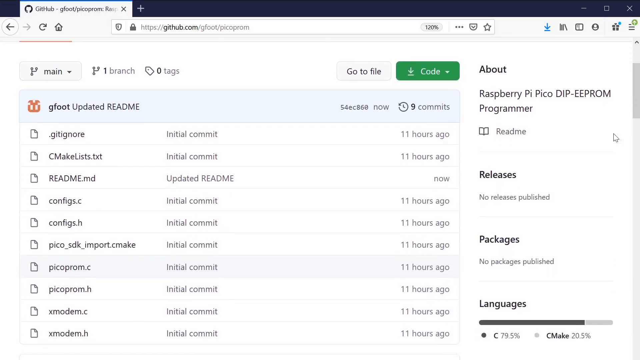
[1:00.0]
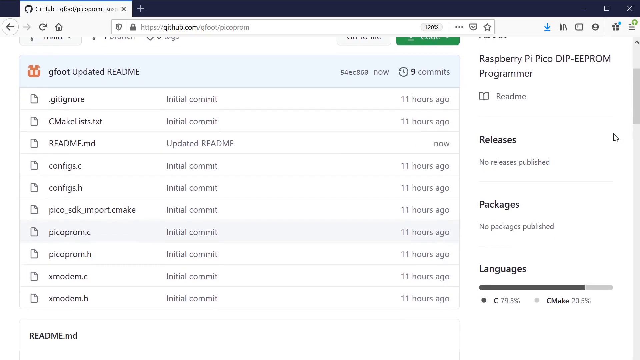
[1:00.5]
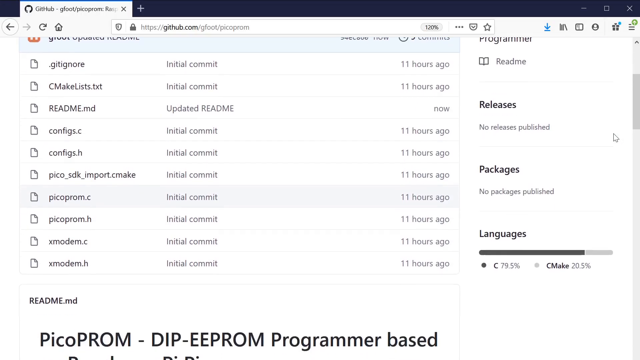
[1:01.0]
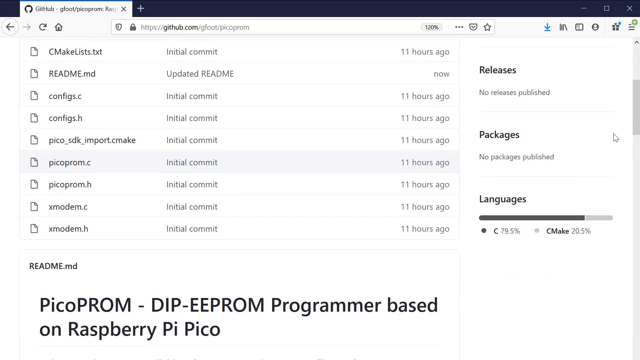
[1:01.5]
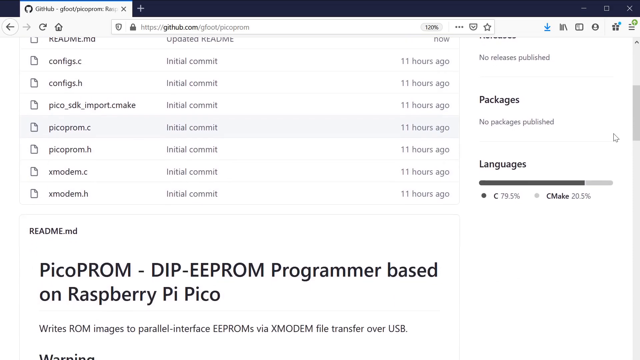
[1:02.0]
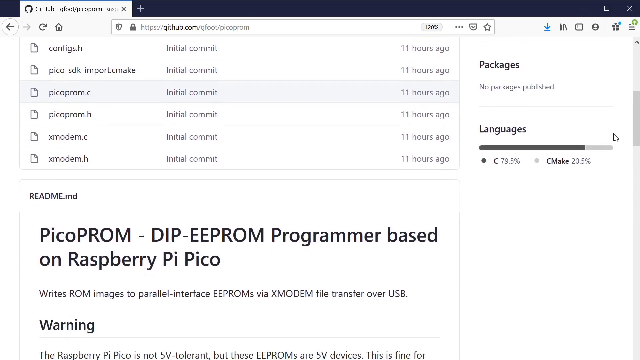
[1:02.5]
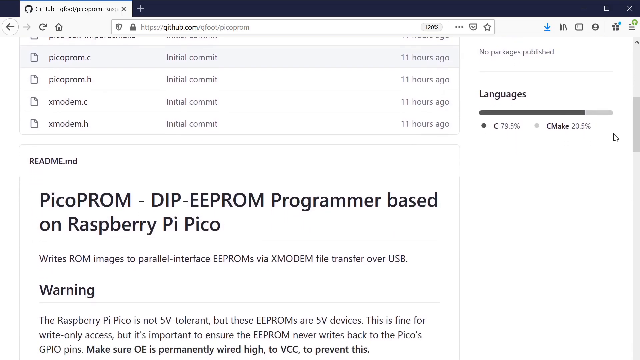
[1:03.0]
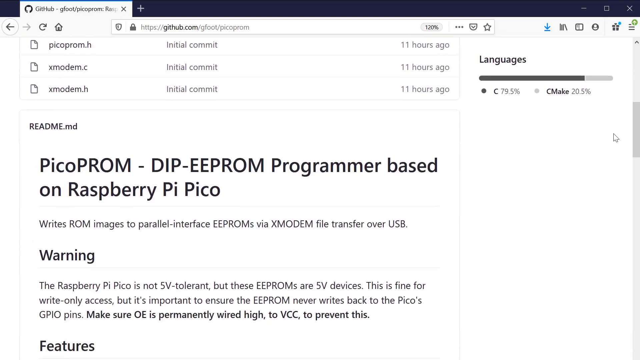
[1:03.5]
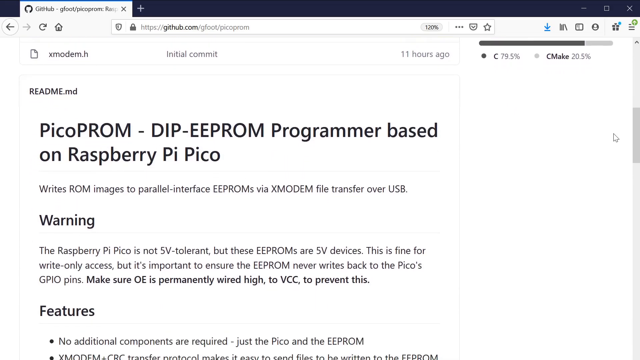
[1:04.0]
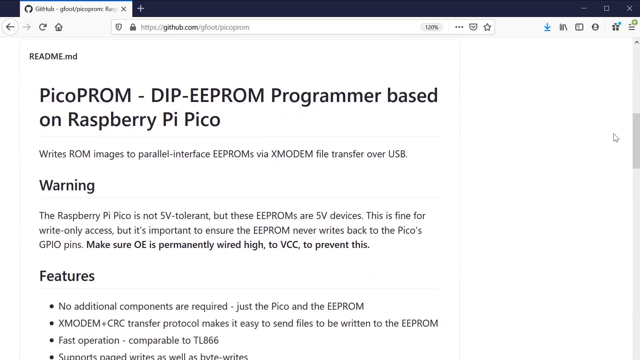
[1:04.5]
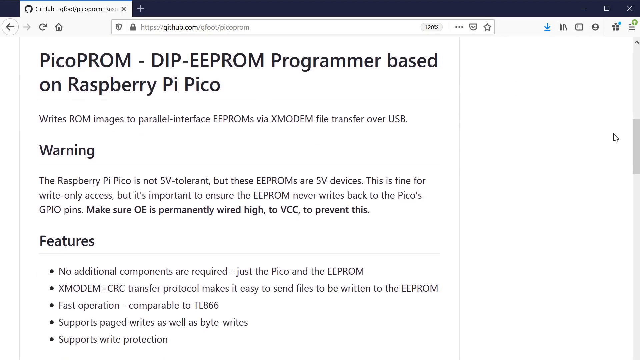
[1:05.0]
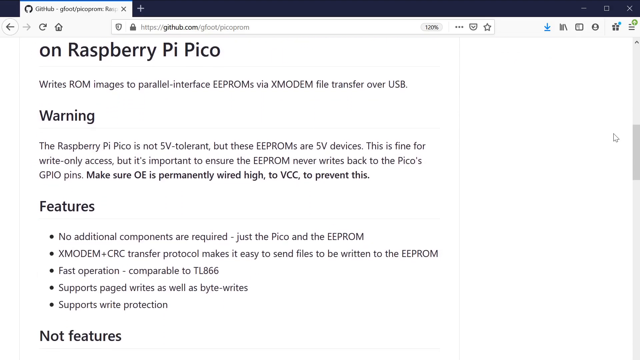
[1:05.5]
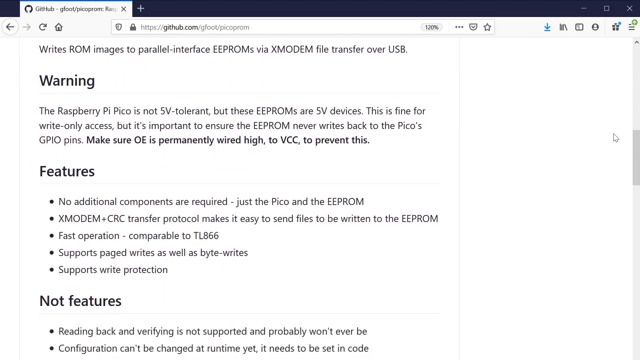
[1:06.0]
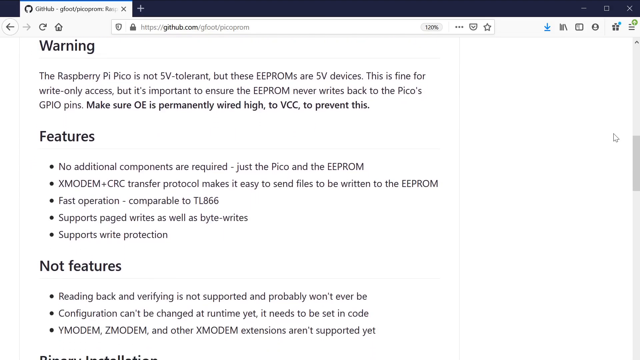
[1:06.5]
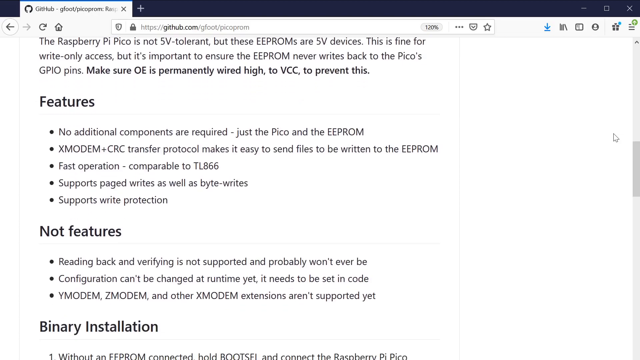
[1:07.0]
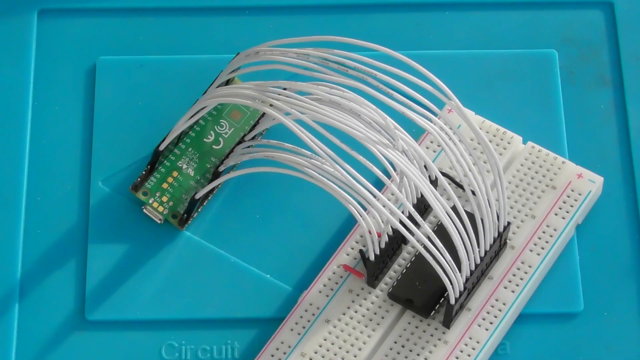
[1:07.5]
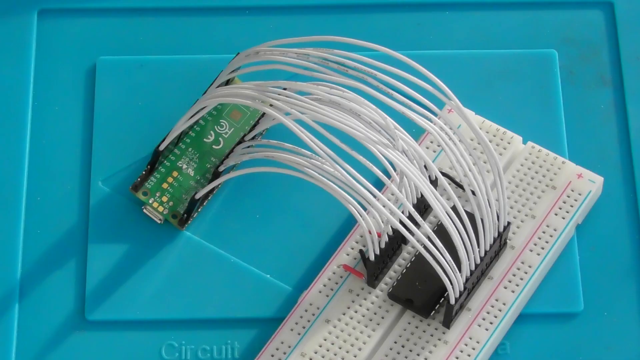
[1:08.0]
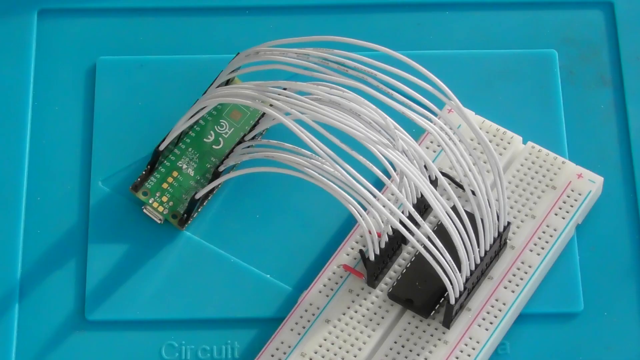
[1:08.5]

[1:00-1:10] Text on the computer shows words including "warning" and "features", apparently programmer-related content. The information seems to have been transferred from what may be a memory stick onto the computer, where it can now be read.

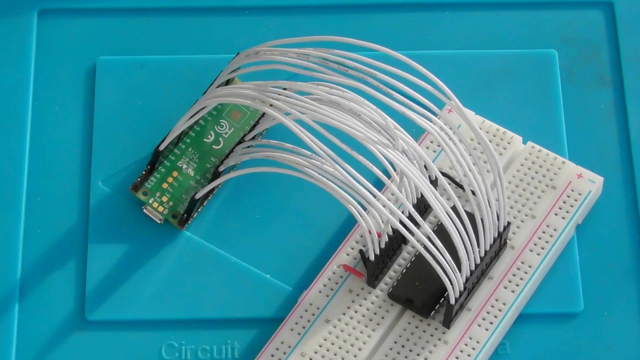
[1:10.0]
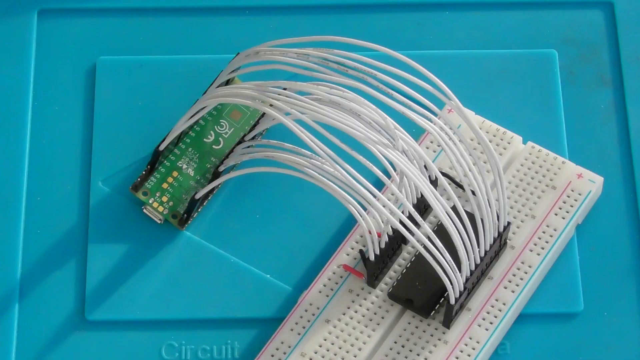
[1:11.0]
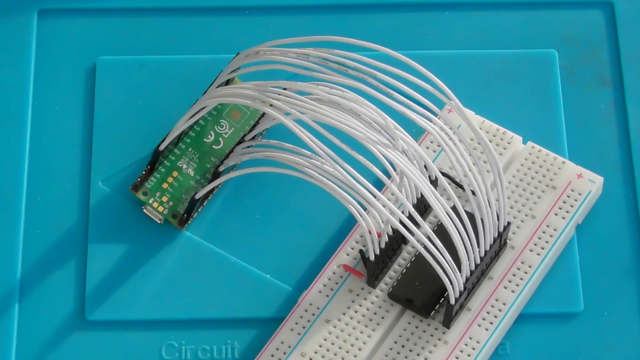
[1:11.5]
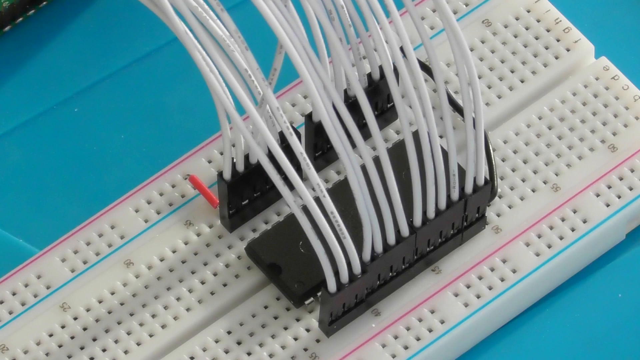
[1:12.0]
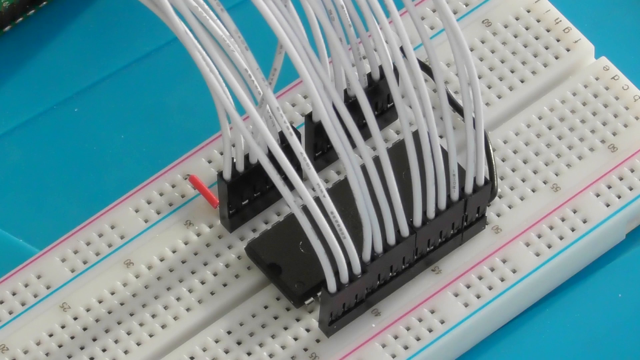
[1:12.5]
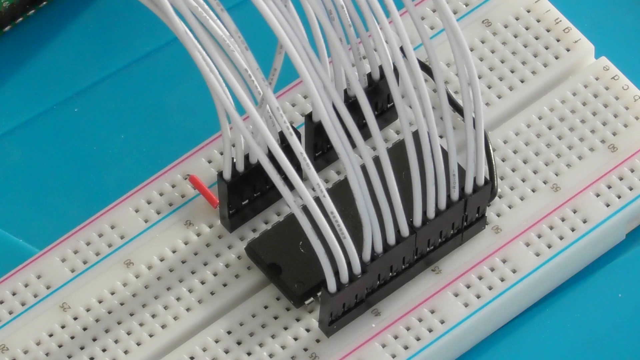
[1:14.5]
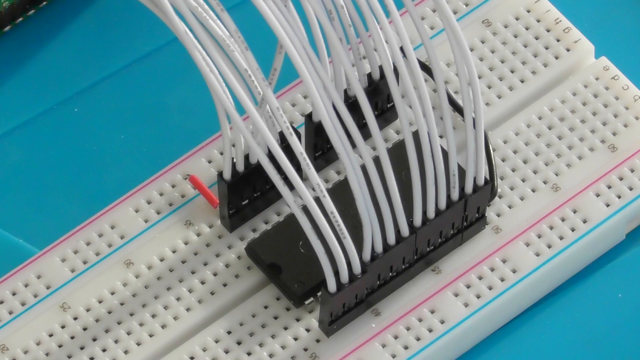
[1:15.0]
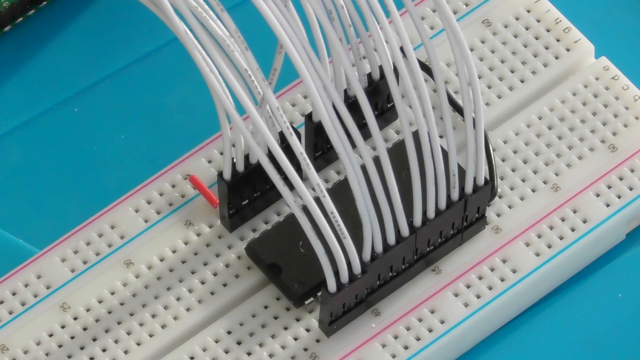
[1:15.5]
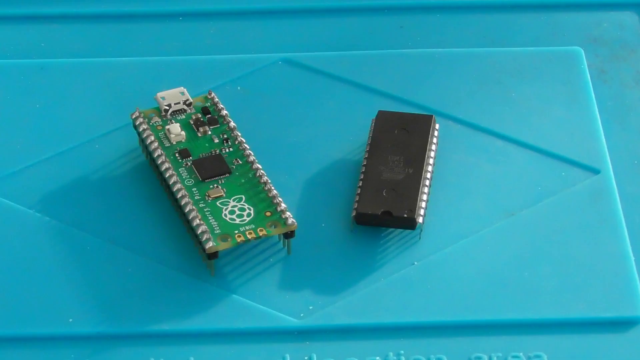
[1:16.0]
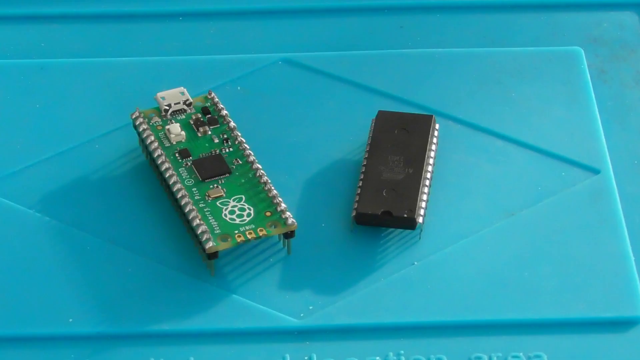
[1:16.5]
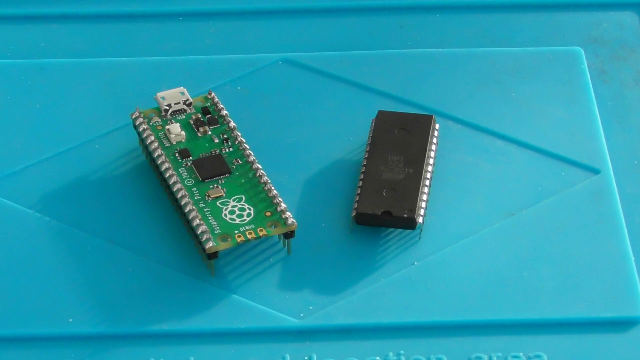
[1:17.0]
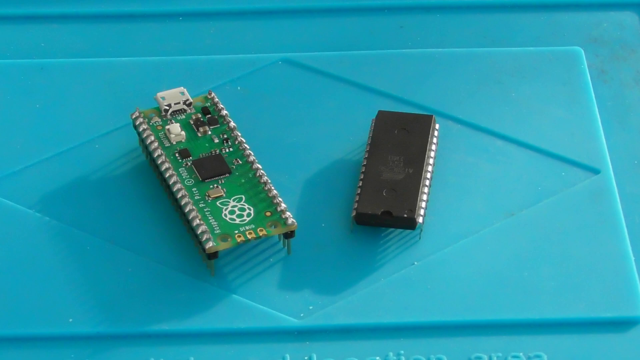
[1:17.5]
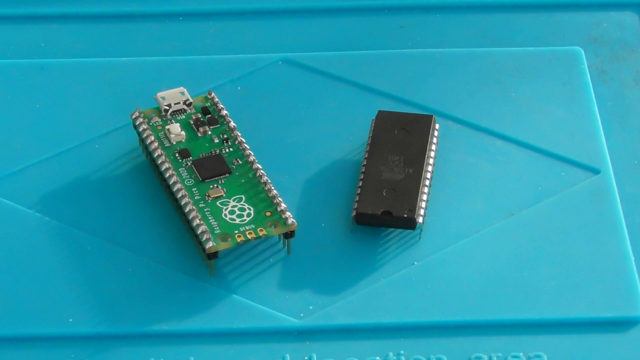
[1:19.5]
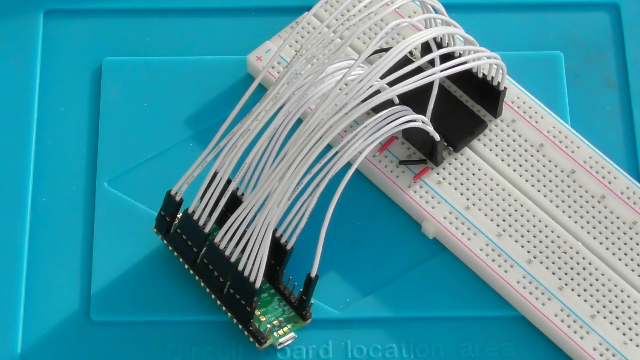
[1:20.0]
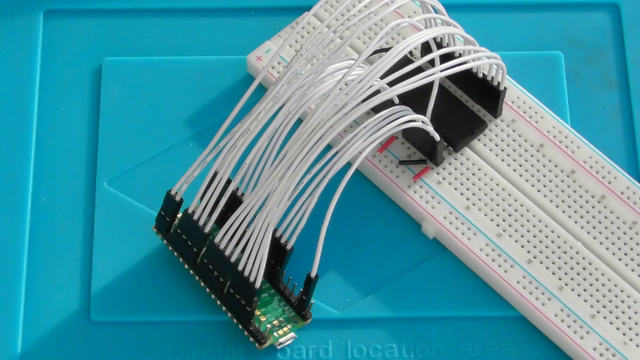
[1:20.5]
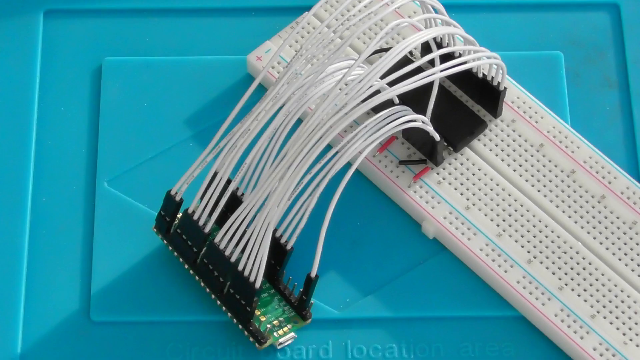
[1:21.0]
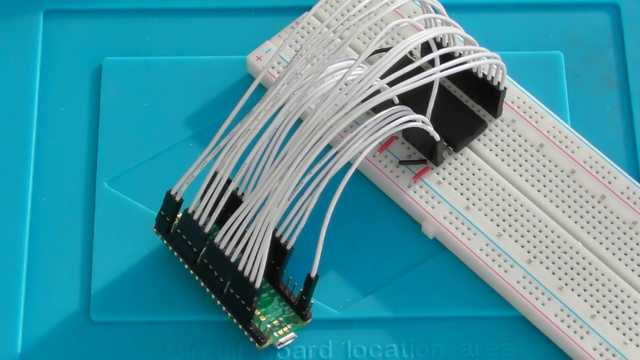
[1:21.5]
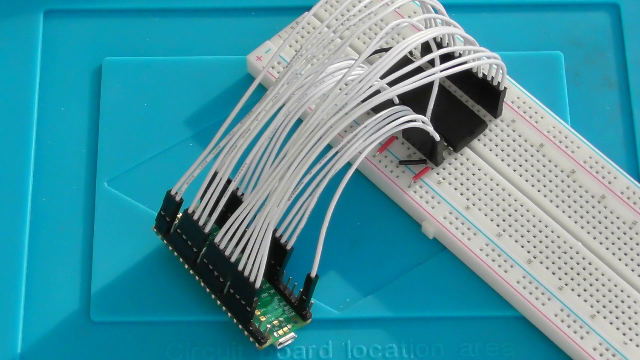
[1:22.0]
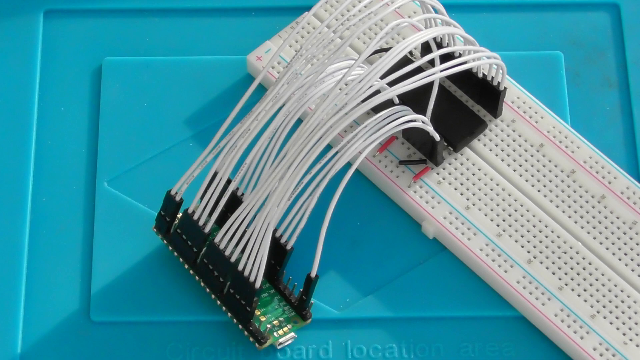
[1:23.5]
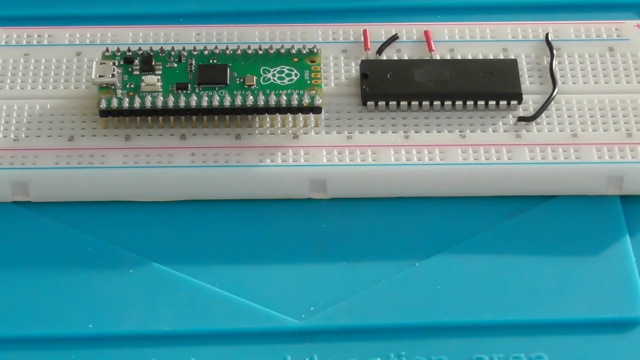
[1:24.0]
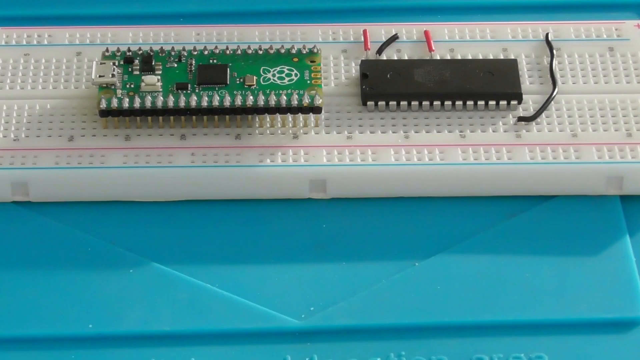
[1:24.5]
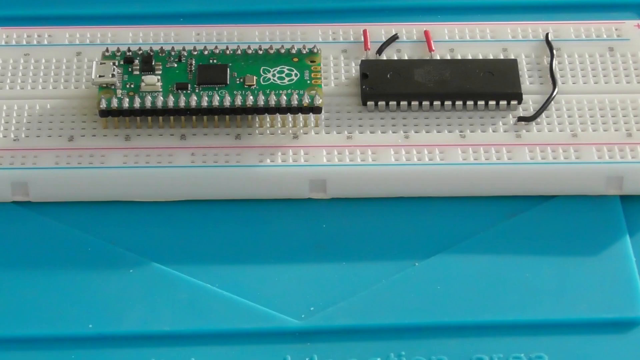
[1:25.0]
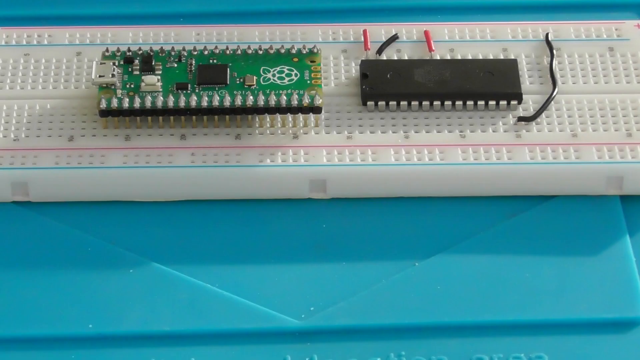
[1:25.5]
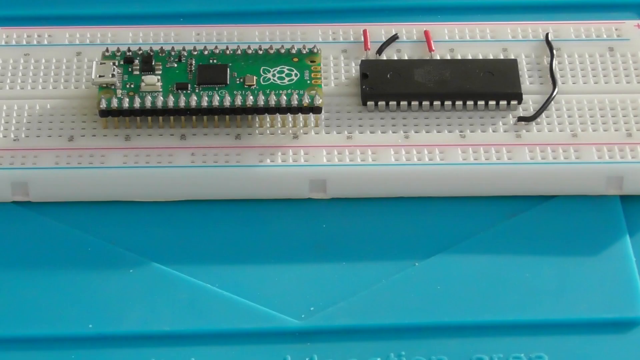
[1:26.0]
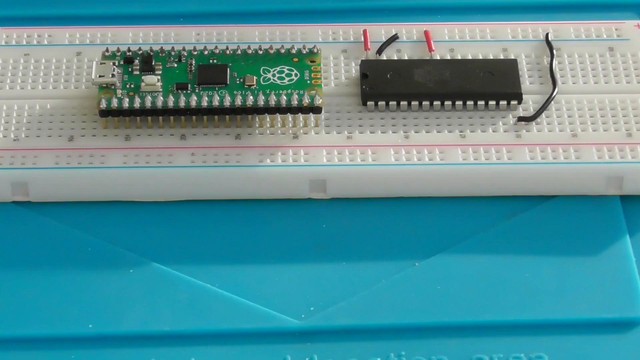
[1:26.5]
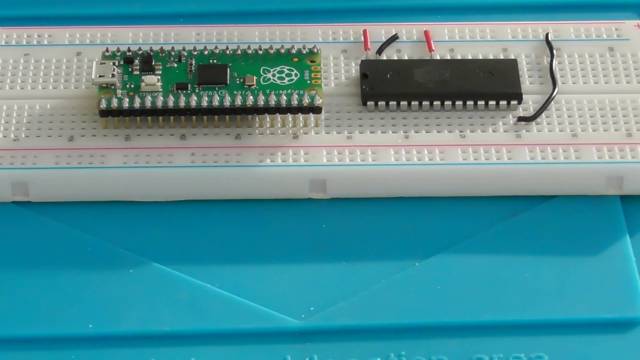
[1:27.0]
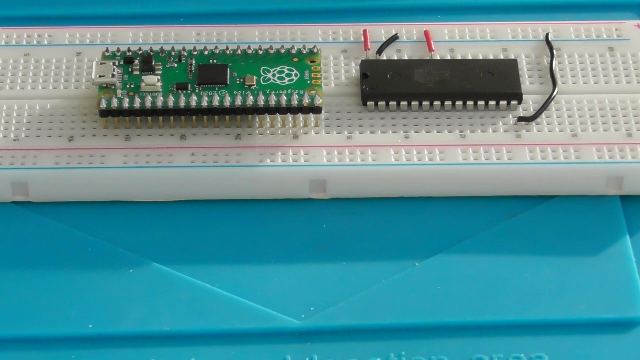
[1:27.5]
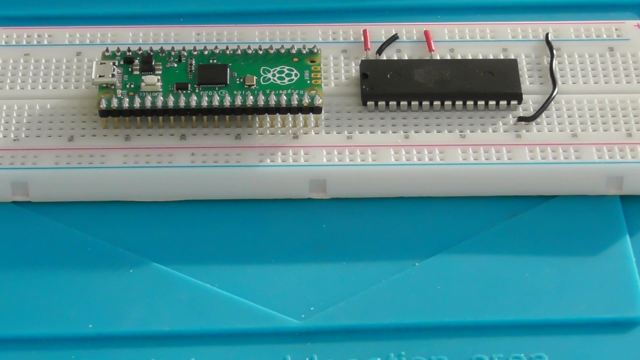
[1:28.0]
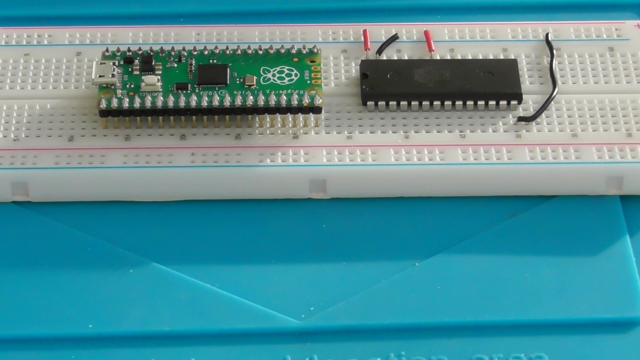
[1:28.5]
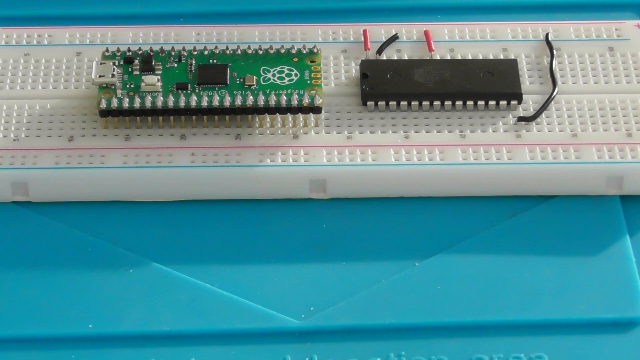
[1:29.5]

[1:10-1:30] Two hands press something to record information to the computer, and the computer is downloading, taking the information. The information then appears written on the computer screen as code. Small components are put together.